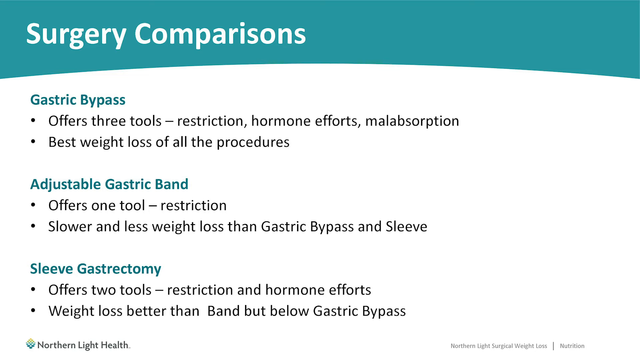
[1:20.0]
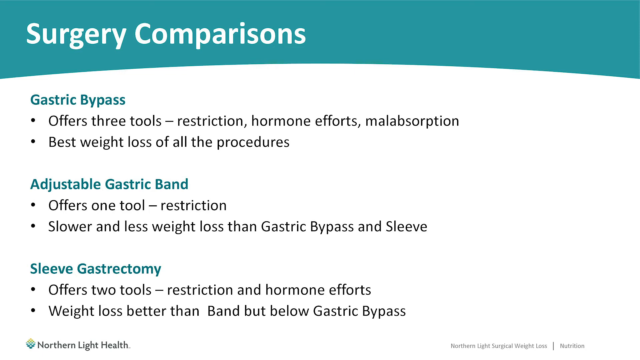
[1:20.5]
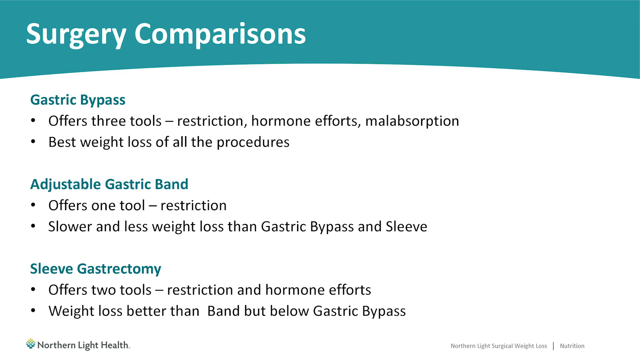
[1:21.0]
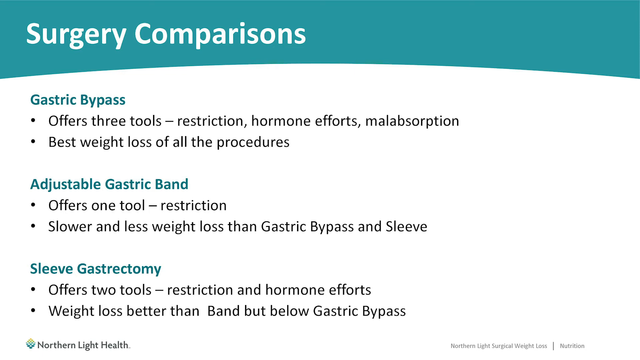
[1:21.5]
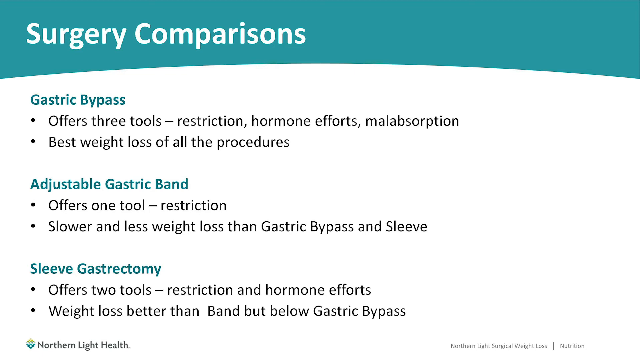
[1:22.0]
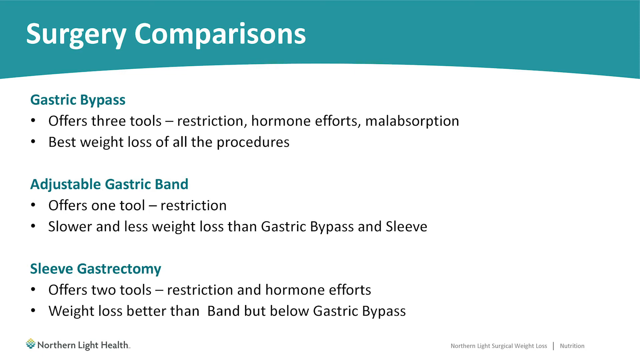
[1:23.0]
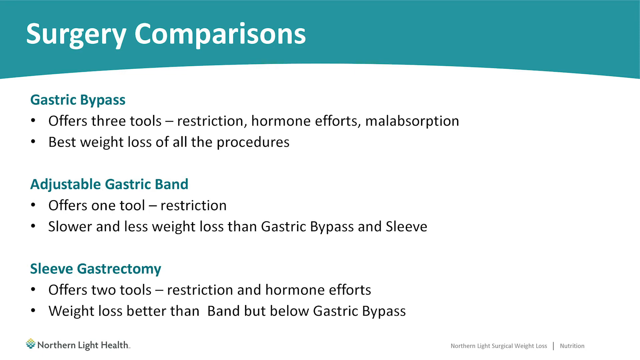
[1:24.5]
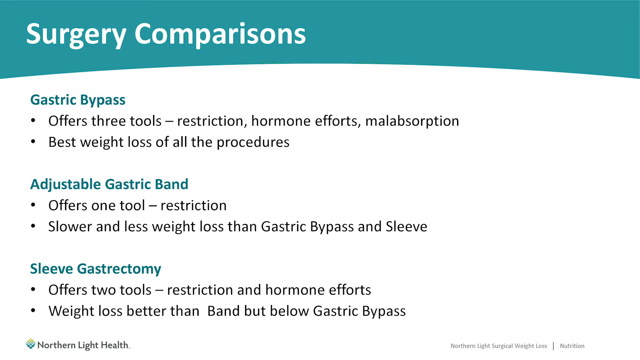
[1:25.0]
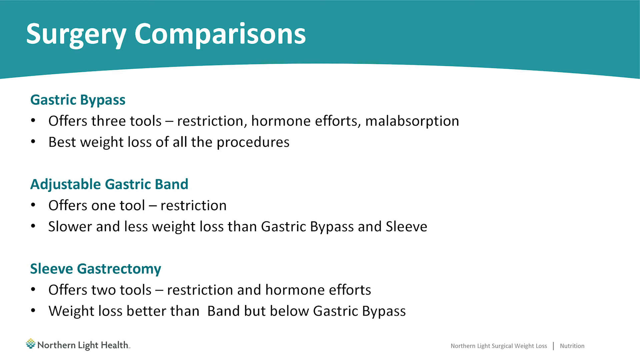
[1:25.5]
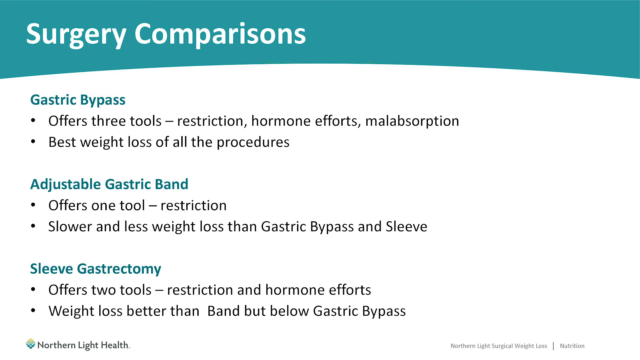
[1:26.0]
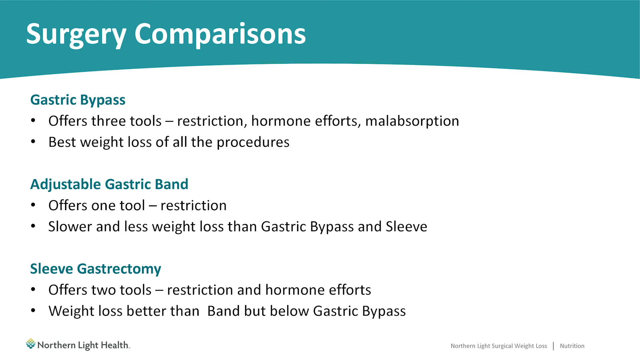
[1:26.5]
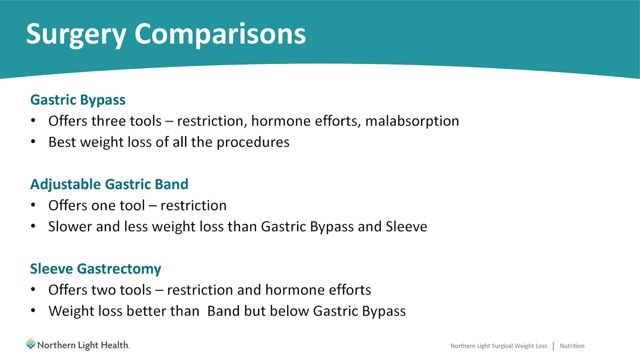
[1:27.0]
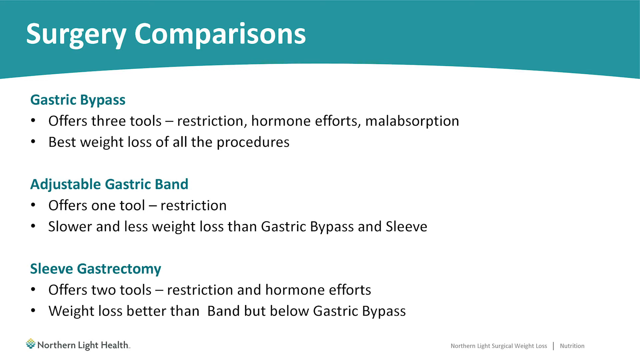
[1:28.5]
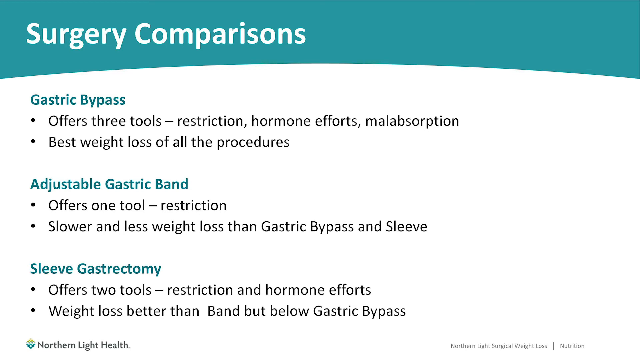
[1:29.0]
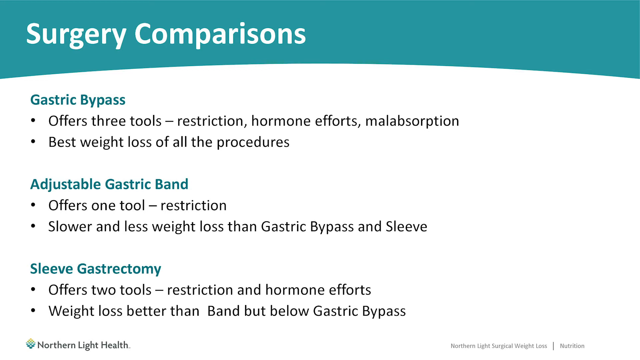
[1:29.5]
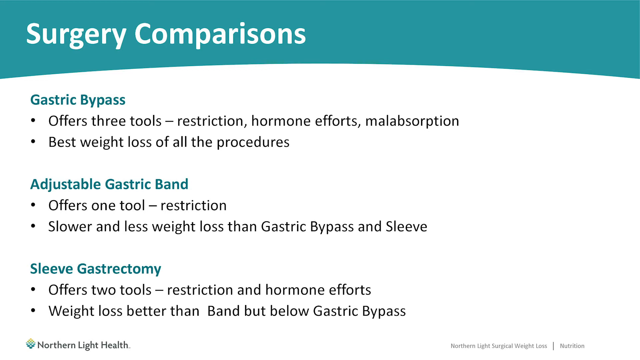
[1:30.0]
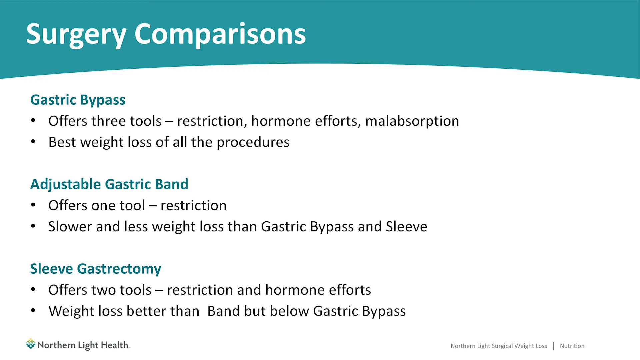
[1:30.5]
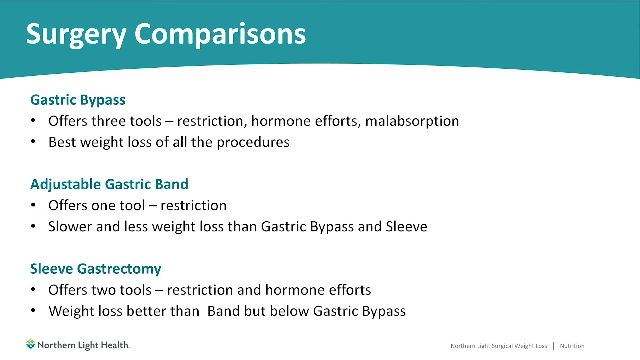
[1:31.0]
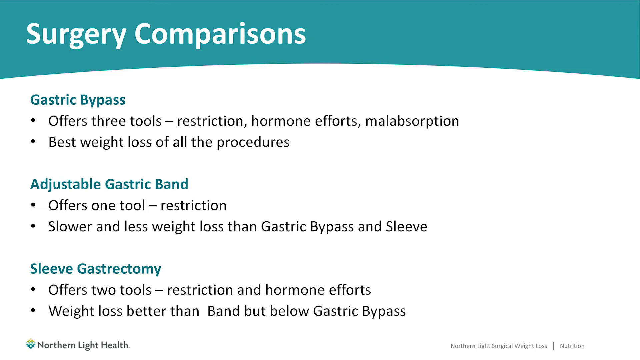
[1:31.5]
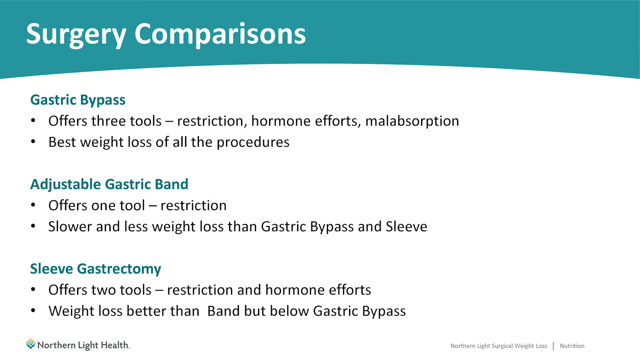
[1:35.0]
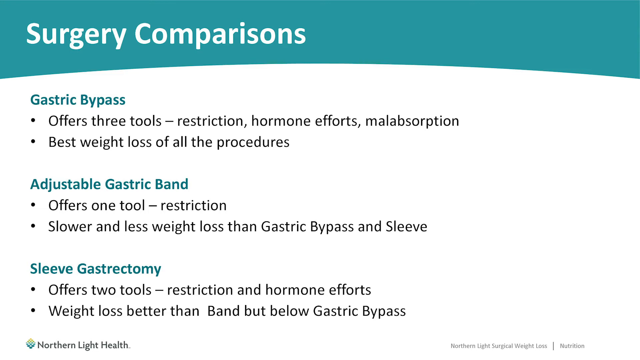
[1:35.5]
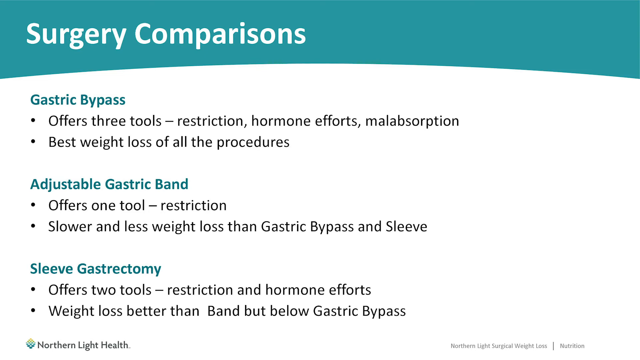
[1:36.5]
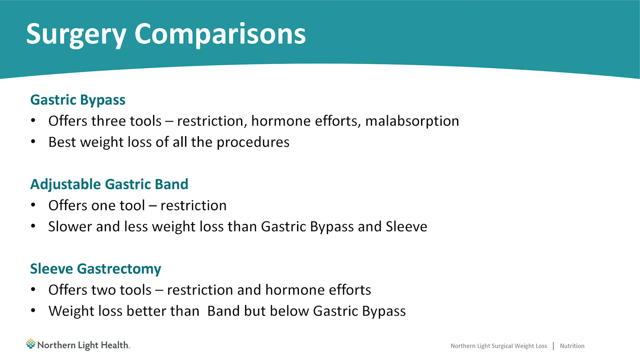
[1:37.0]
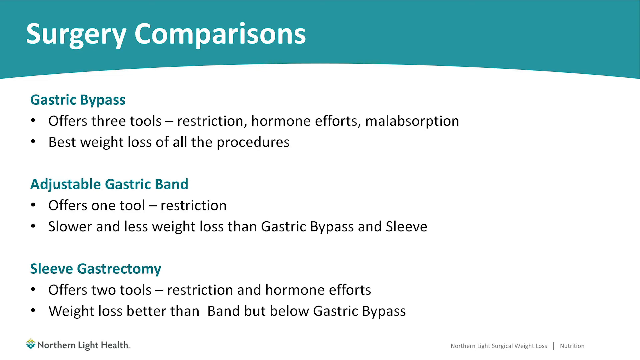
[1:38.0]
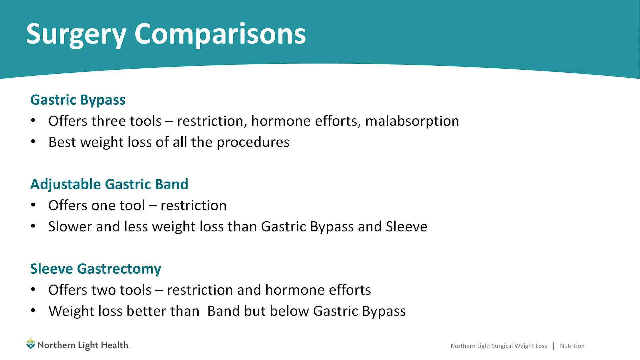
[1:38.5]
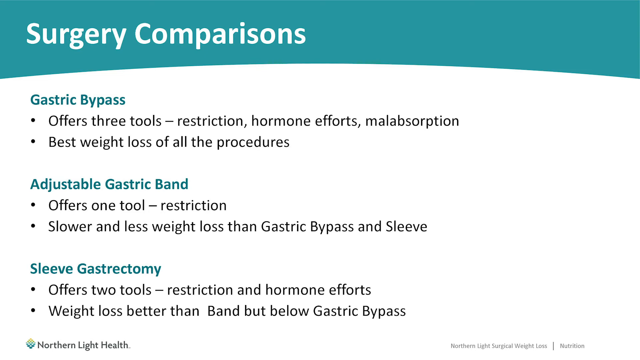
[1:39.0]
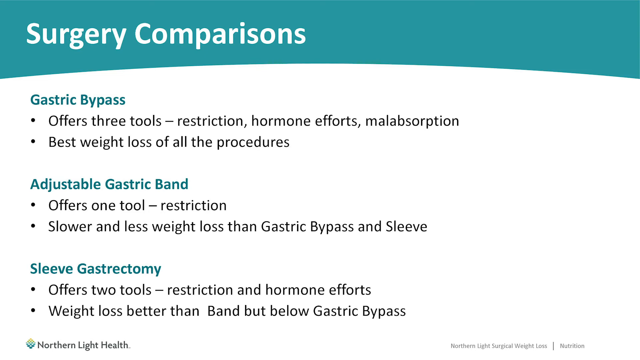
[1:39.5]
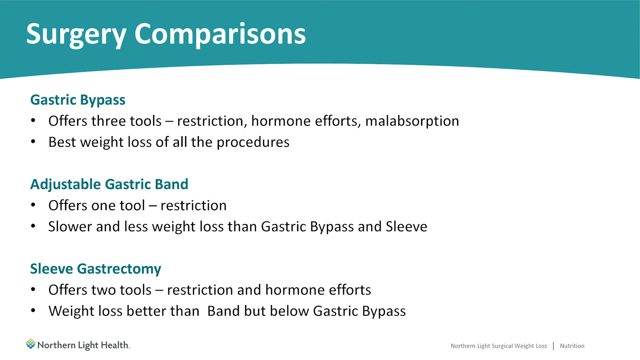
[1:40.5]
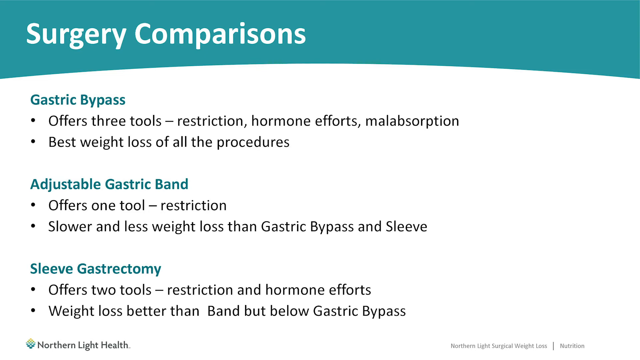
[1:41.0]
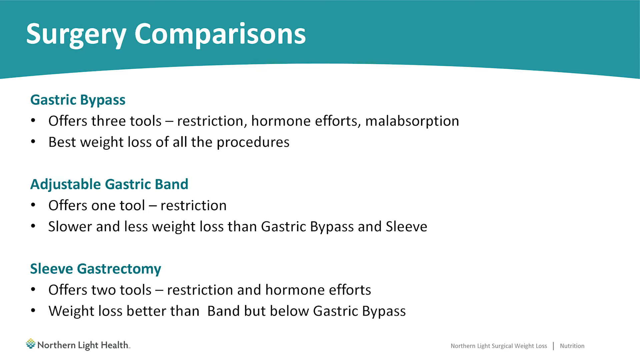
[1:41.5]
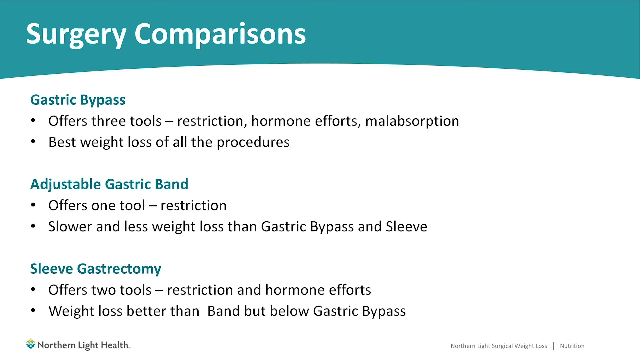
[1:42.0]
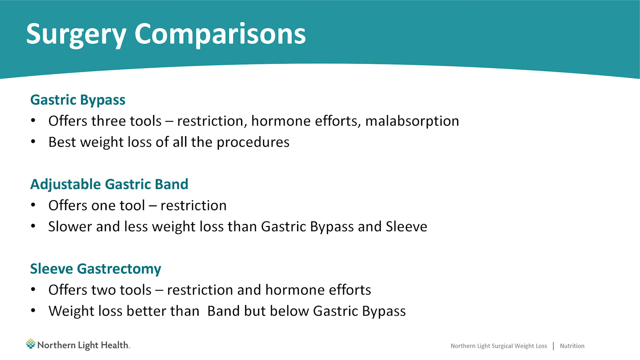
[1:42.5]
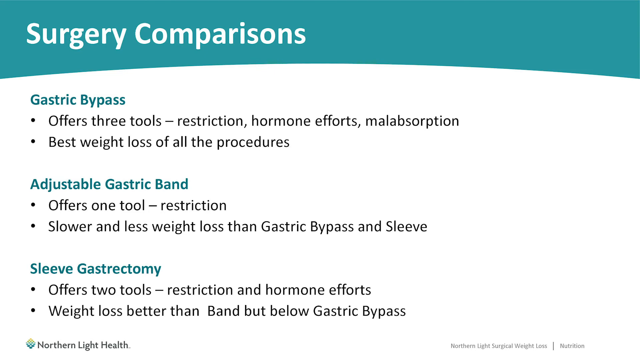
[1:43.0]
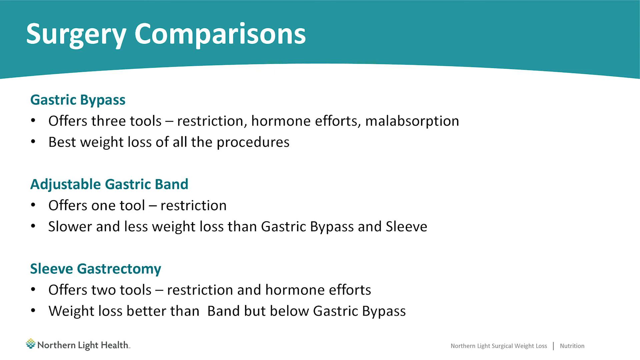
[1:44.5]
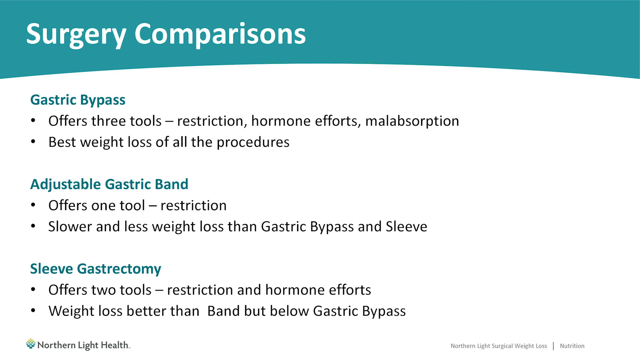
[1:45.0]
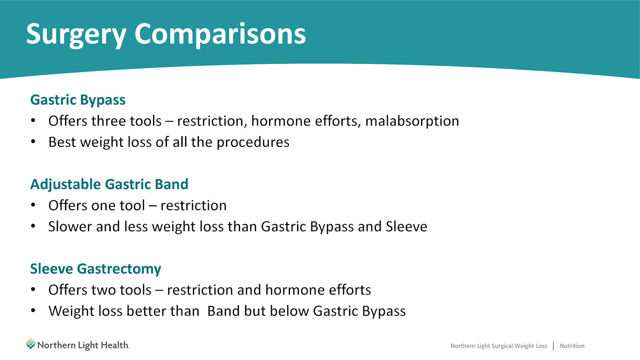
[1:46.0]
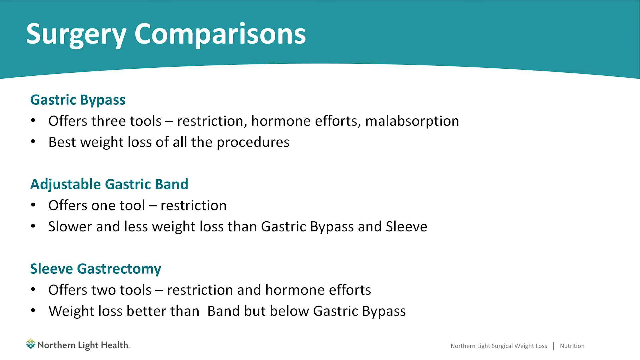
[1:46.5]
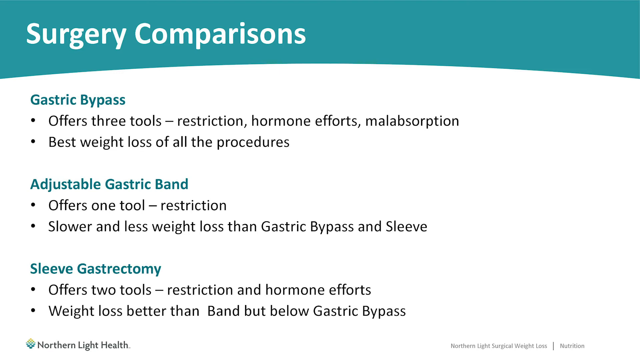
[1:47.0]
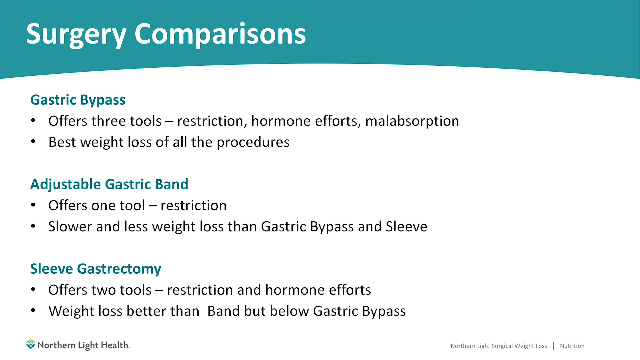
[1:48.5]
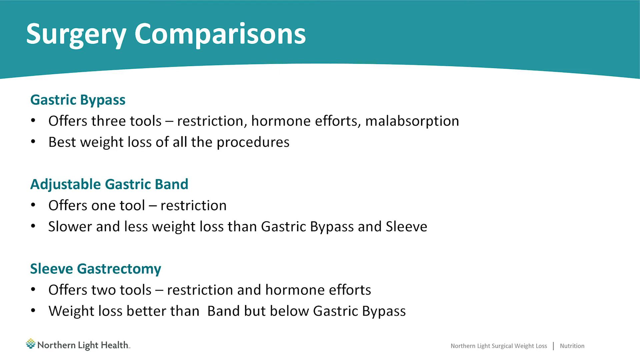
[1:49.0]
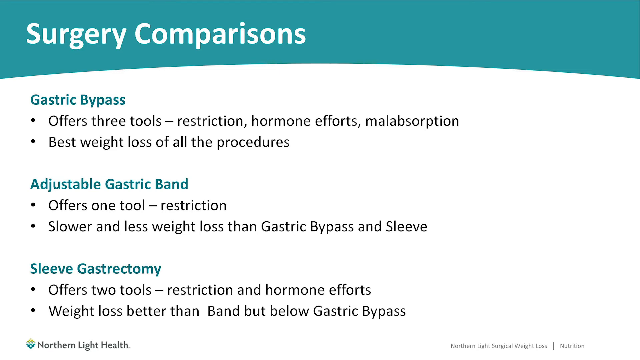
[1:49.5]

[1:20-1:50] Words are shown on a PowerPoint slide. The title, "Surgery Comparisons," is in a white font. Beneath it are "Gastric Bypass, offers three tools, restriction, hormone effects, malabsorption, best weight loss of all the procedures." The next subtitle is "Adjustable Gastric Band, offers one tool, restriction, slower and less weight loss than gastric bypass and sleeve," and the final one is "Sleeve Gastrectomy, offers two tools, restriction and hormone effects, weight loss better than band, but below gastric bypass." The information is on a white background, although the top fifth or sixth of the screen is blue and has a curve to it. A yellow, green, and blue logo with the words "Northern Light Health" is in the bottom left-hand corner. In the bottom right-hand corner are smaller black words too small to read, and there are also words there in a blue font that are too small to read.